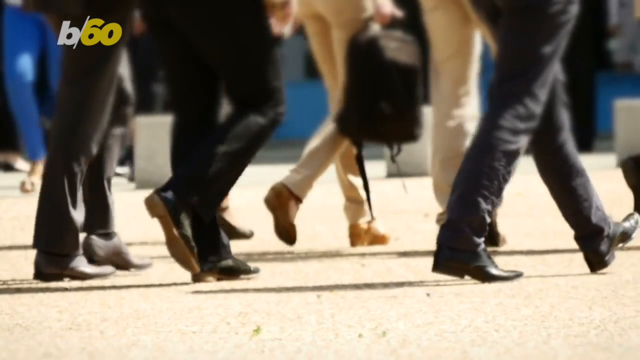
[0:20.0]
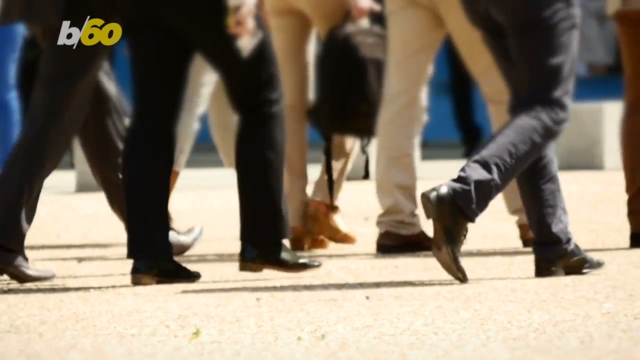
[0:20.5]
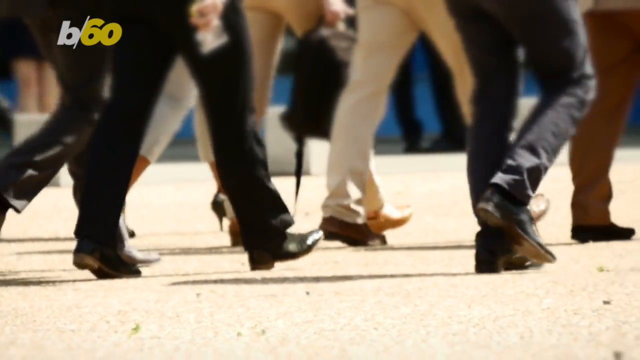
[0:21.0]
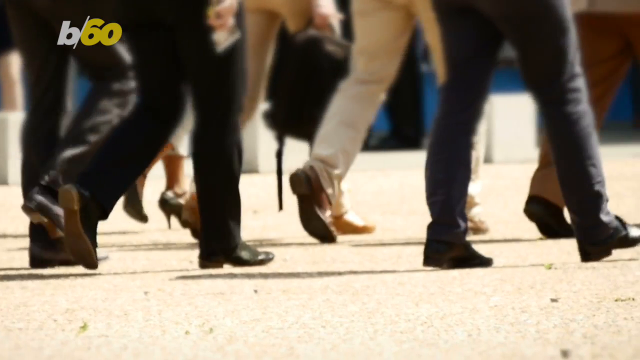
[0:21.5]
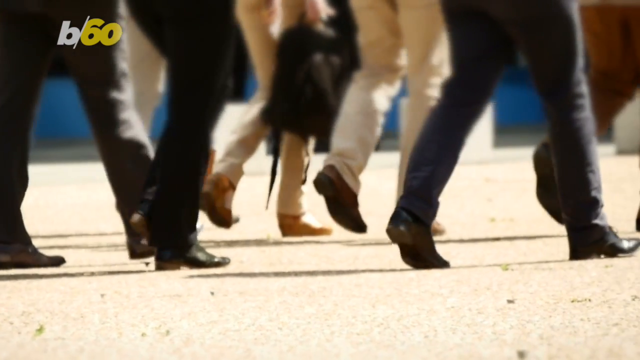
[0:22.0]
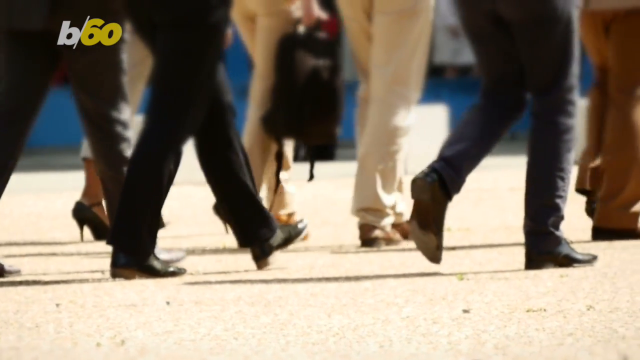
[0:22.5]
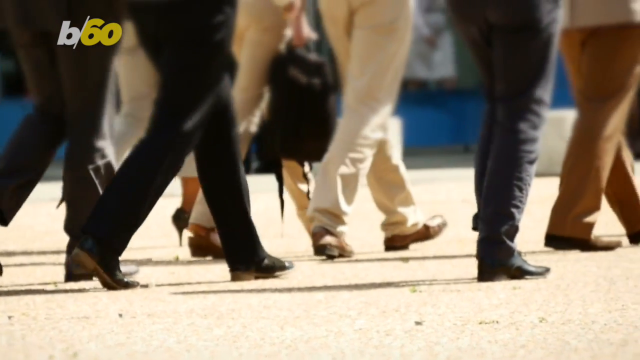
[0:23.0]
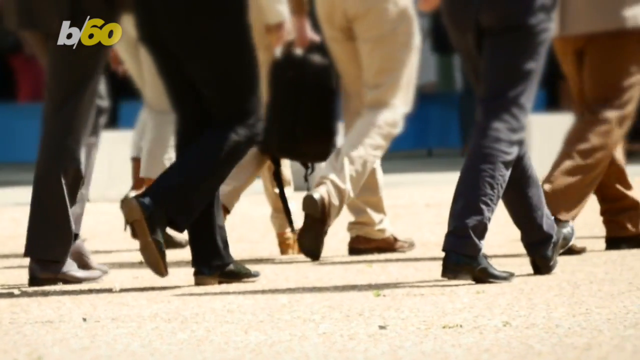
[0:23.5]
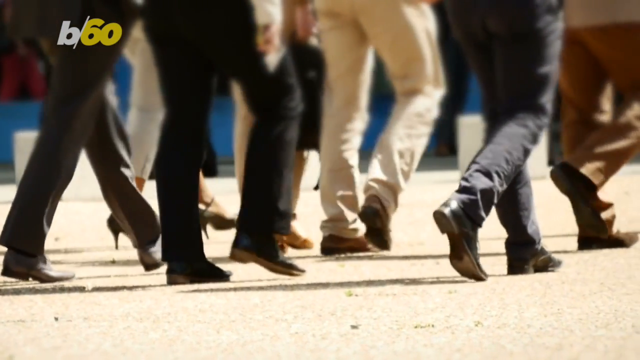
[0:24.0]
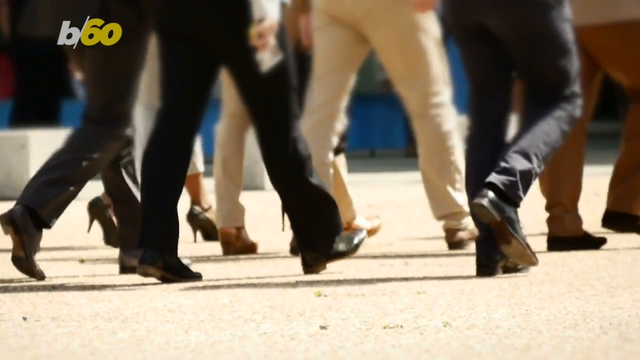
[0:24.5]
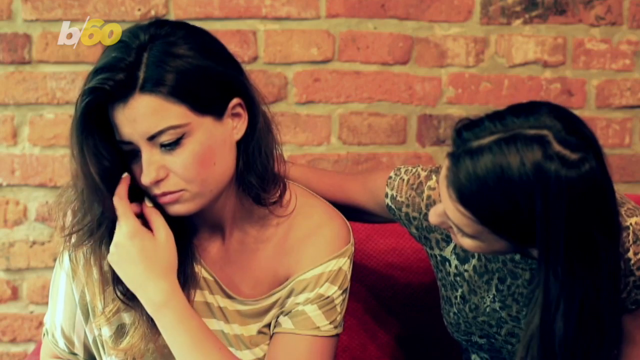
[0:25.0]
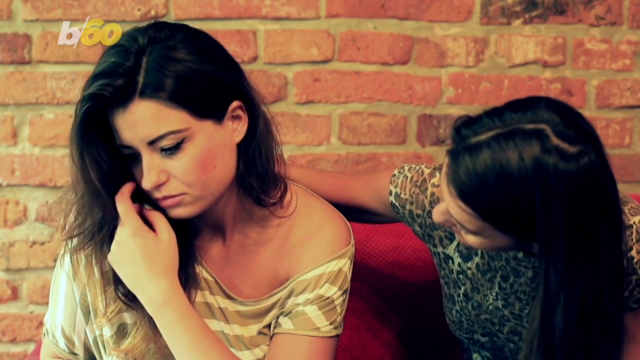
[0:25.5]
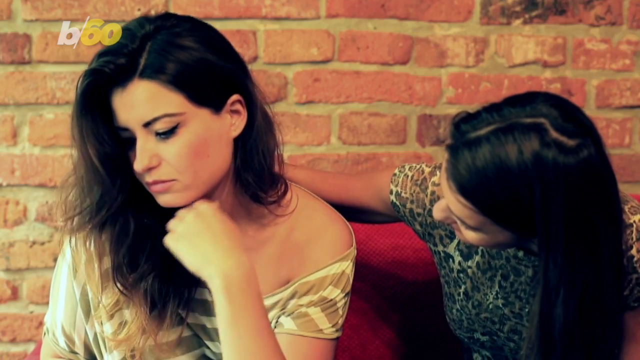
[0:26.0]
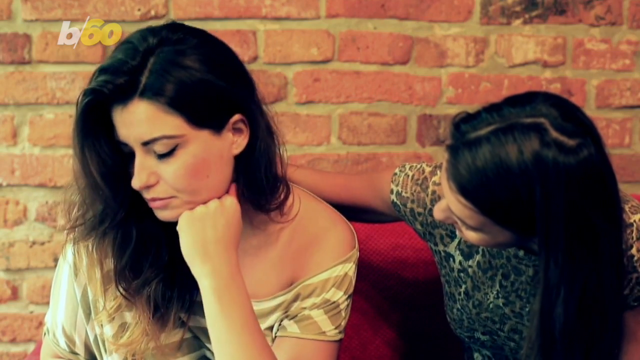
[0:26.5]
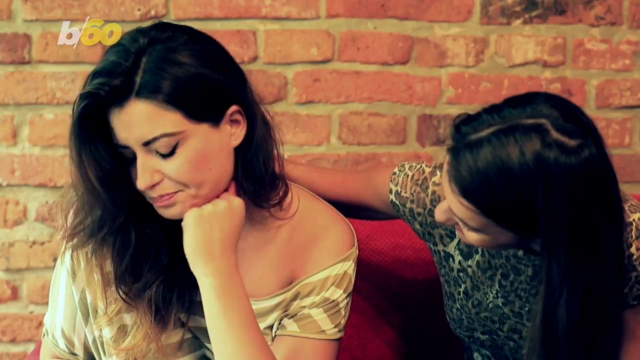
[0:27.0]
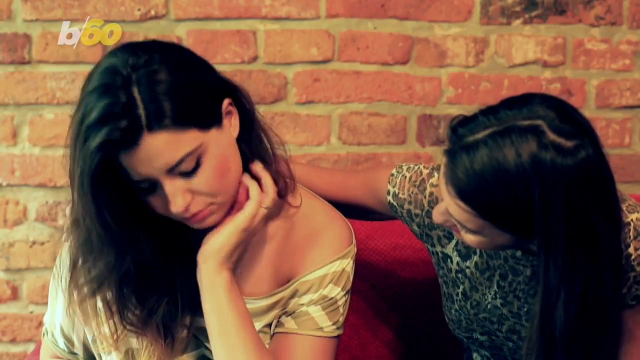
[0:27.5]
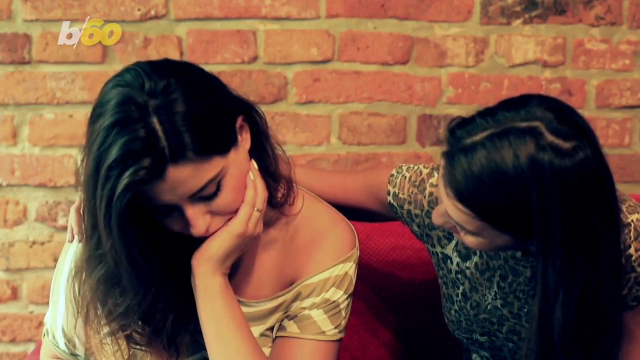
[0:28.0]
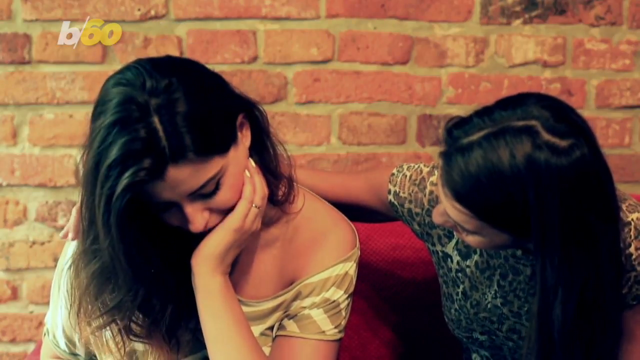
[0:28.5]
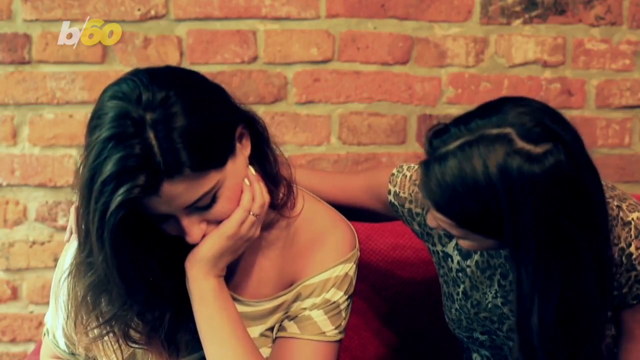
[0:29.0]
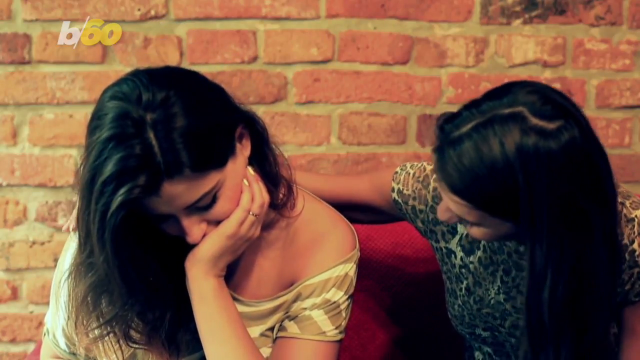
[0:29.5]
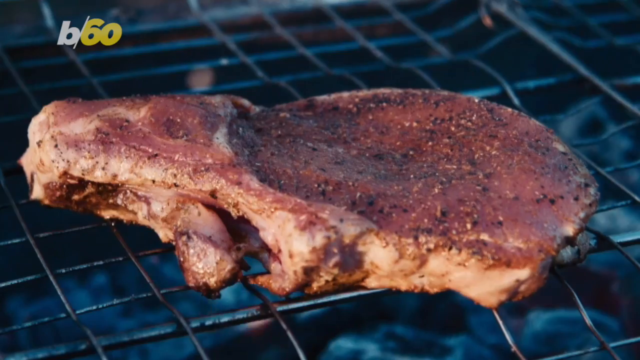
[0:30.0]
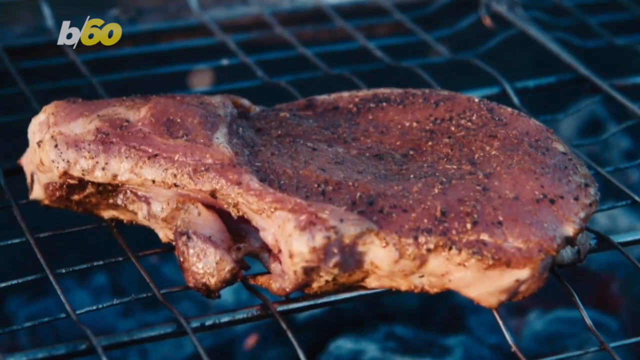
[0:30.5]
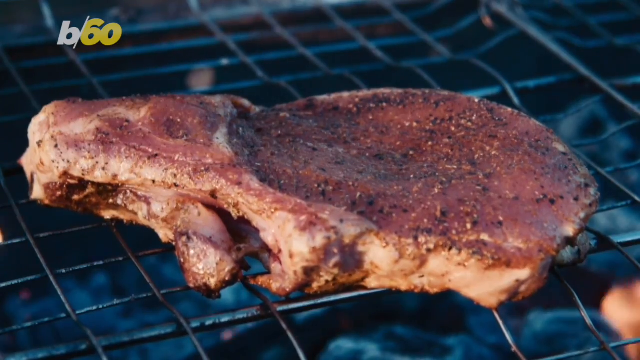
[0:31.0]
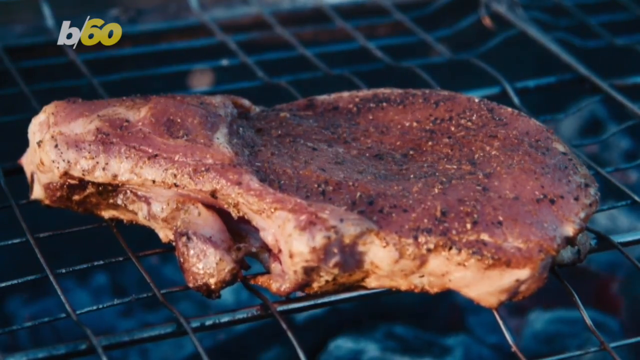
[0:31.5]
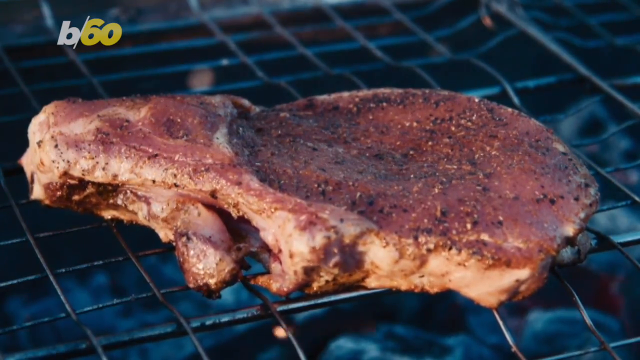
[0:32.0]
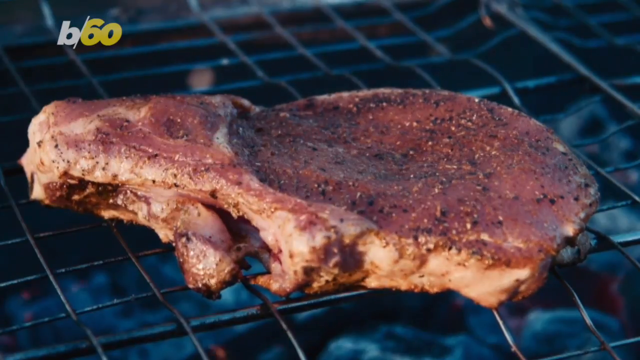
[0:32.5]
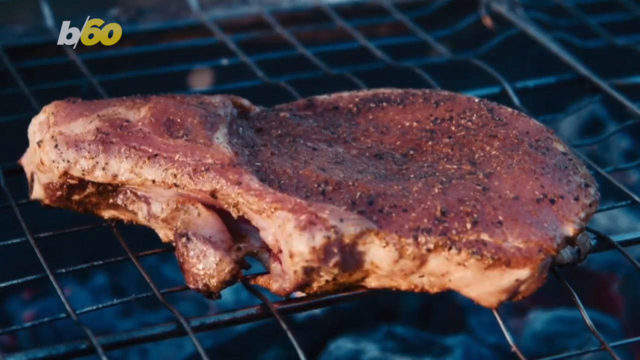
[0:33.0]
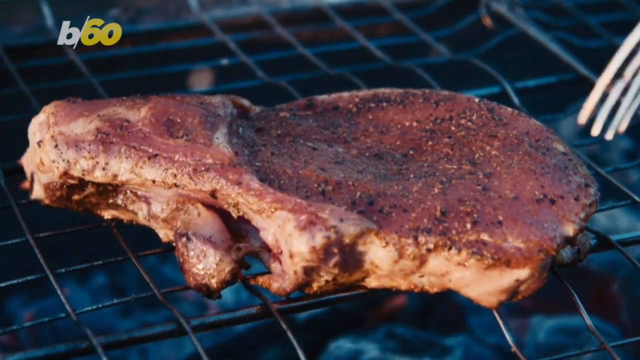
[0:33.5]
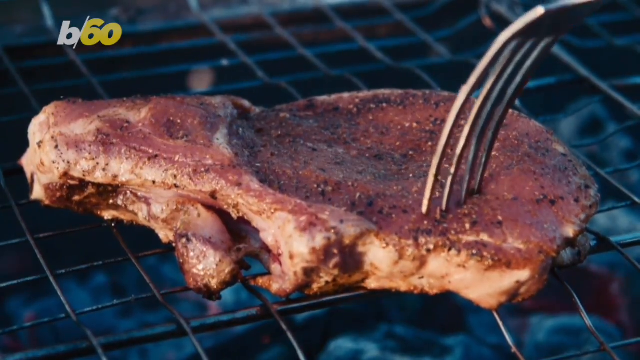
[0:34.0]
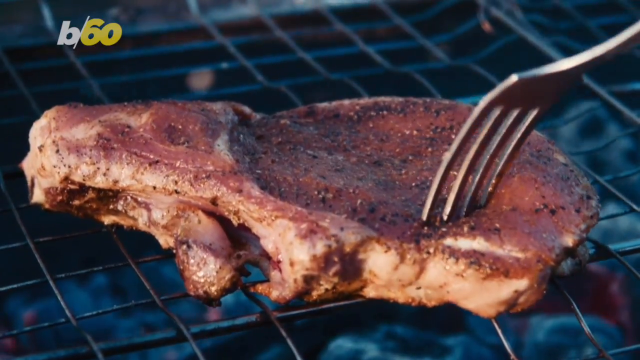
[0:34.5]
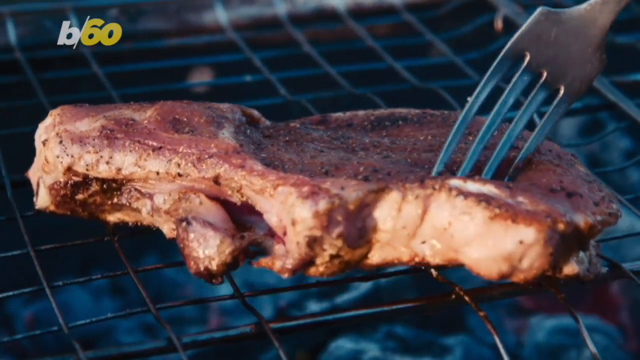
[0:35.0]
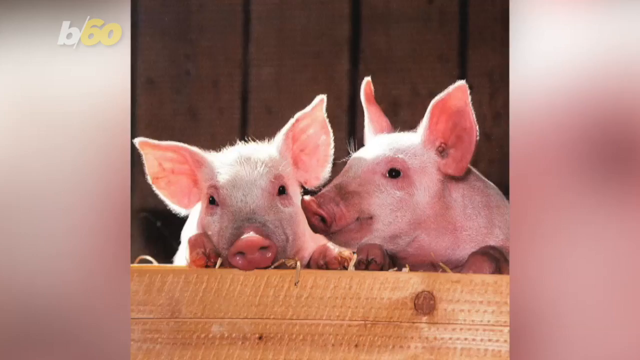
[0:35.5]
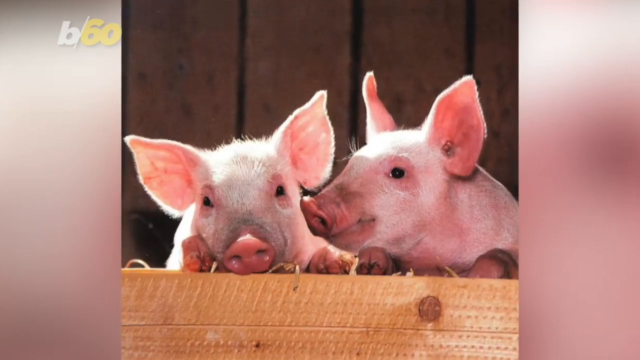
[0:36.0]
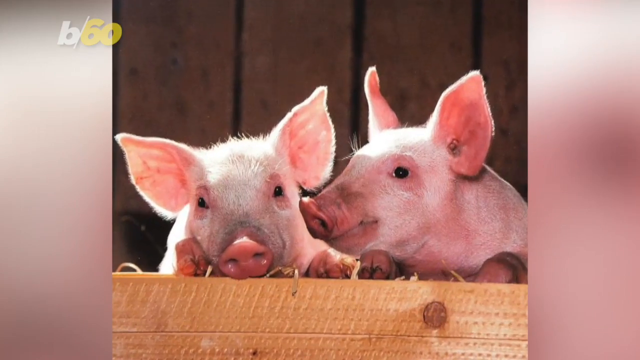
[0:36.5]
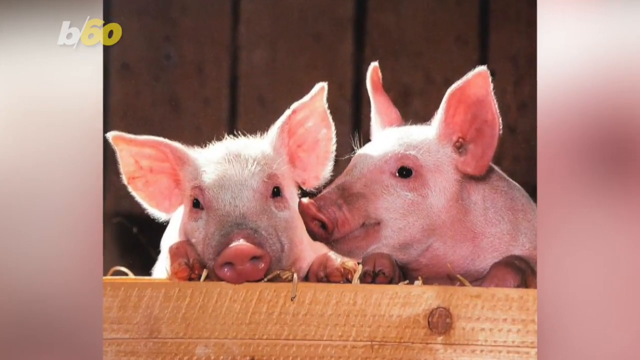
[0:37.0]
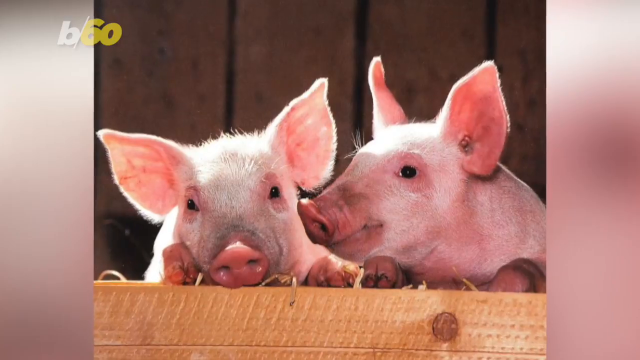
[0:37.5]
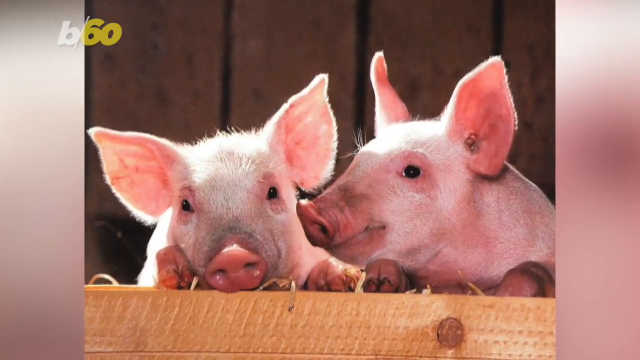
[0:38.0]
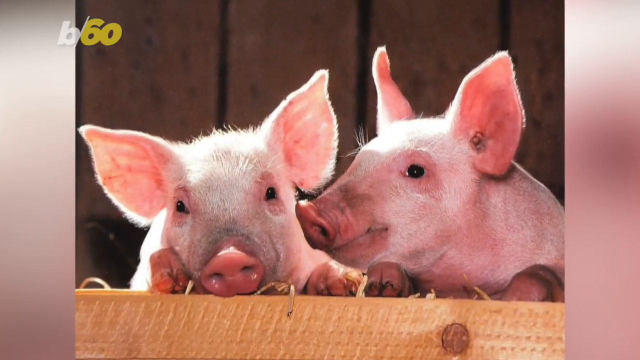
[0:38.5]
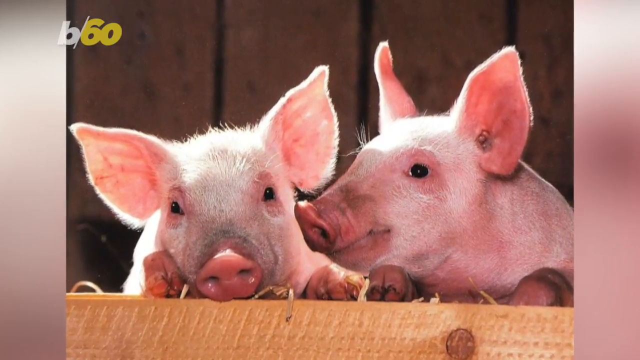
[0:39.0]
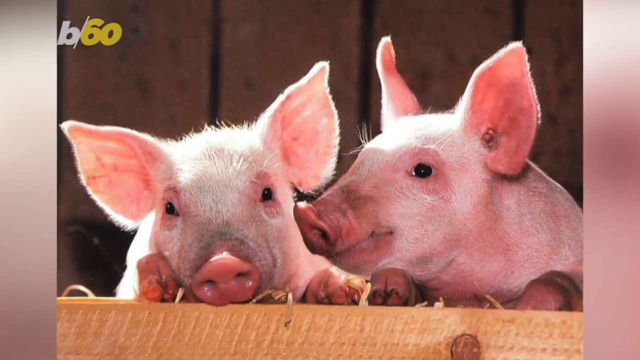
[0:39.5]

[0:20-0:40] The legs and feet of various men appear as they move. They wear different pants, some khaki and some black and gray, and their shoes are different colors. Further back, one woman is working among them. The scene shifts to two women with black hair. The one on the left seems sad; she holds her hand to her chin, wears a cream-white t-shirt with brown stripes, and looks to the side. The other woman, in a leopard-print t-shirt, seems to be comforting her. Behind them is a building with visible bricks and cement. Next comes a seasoned steak being roasted, and someone picks it up with a fork.